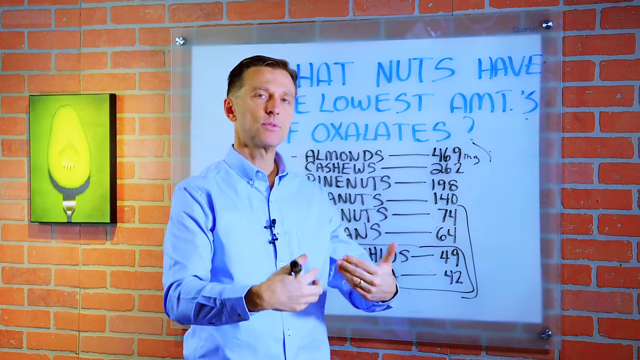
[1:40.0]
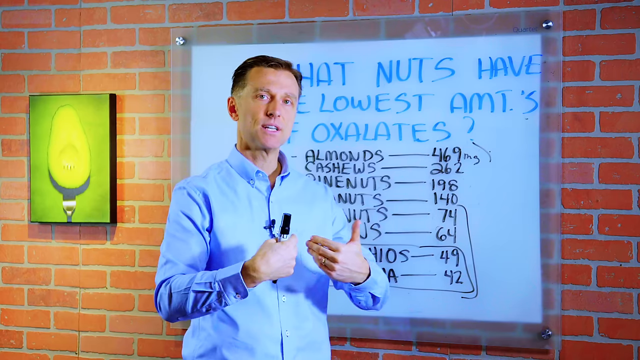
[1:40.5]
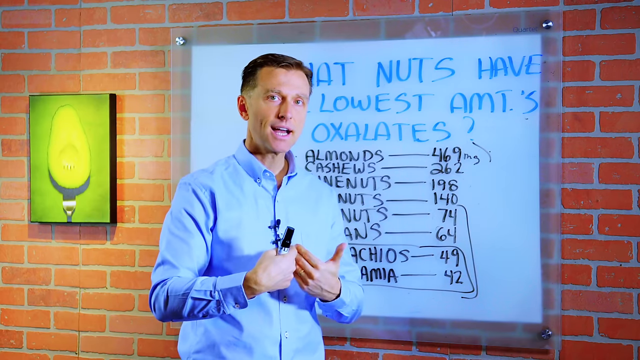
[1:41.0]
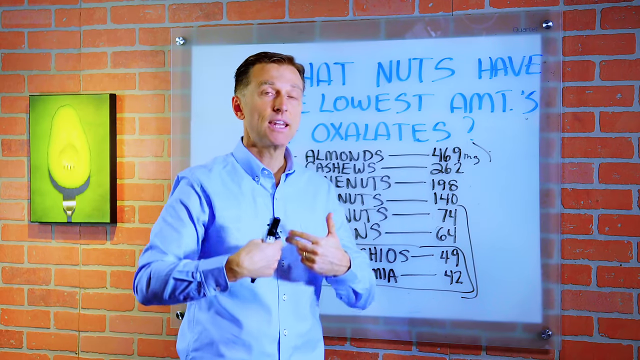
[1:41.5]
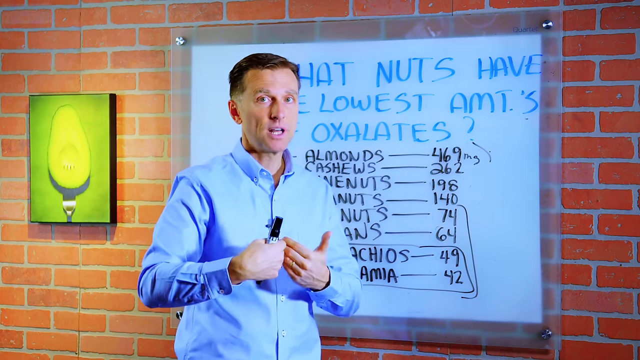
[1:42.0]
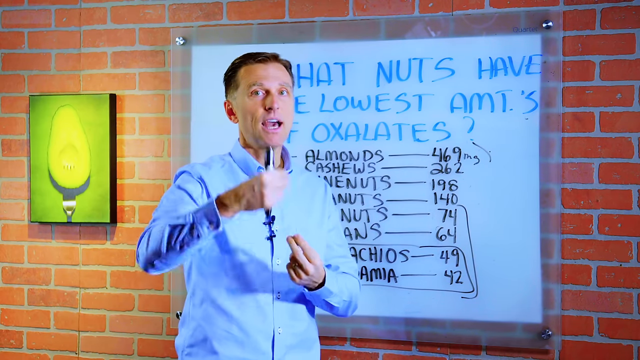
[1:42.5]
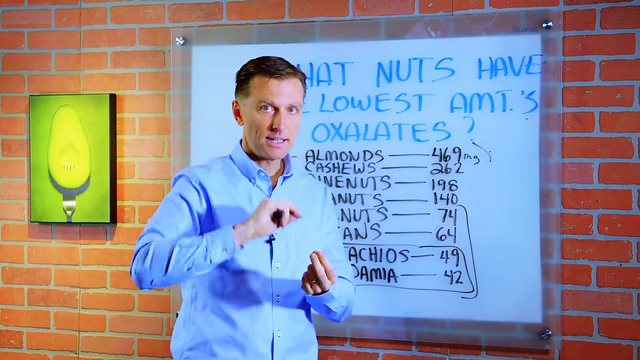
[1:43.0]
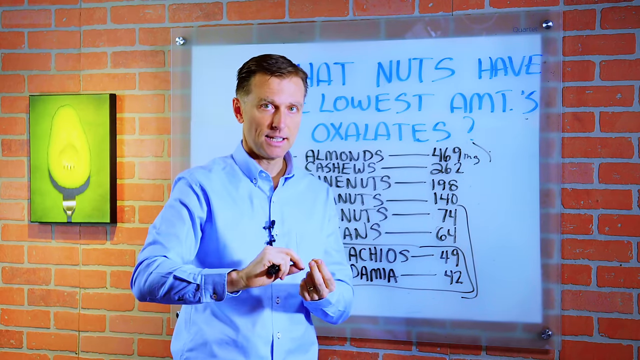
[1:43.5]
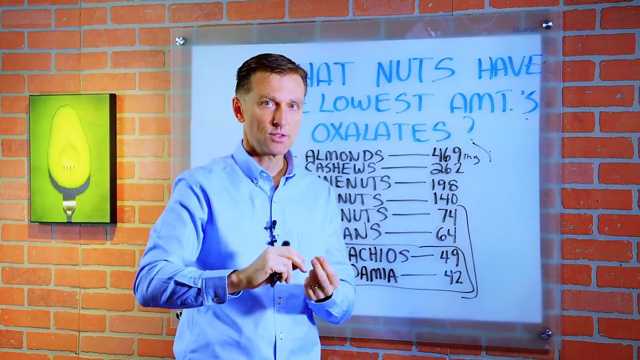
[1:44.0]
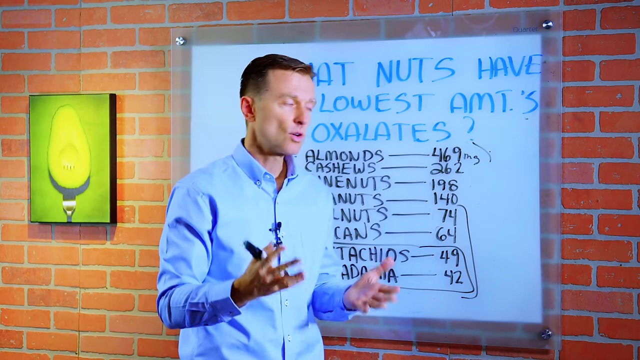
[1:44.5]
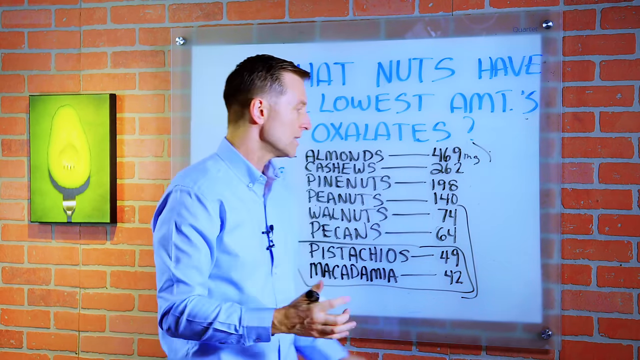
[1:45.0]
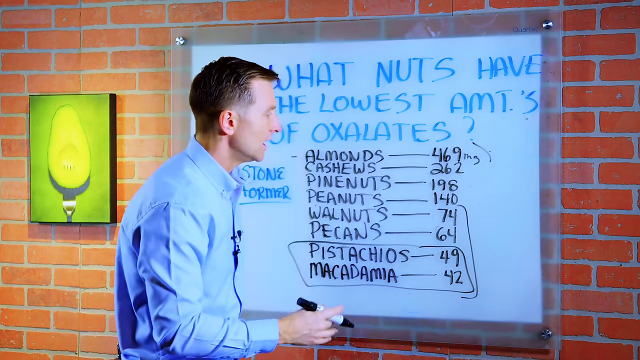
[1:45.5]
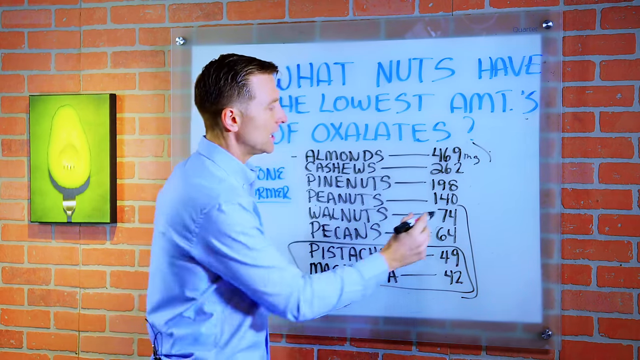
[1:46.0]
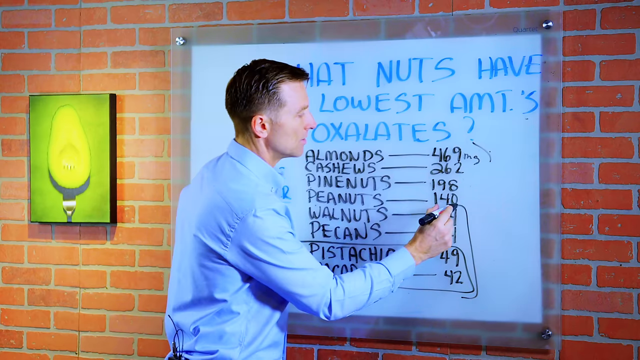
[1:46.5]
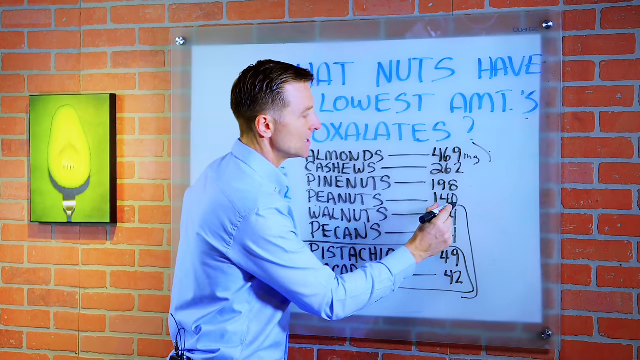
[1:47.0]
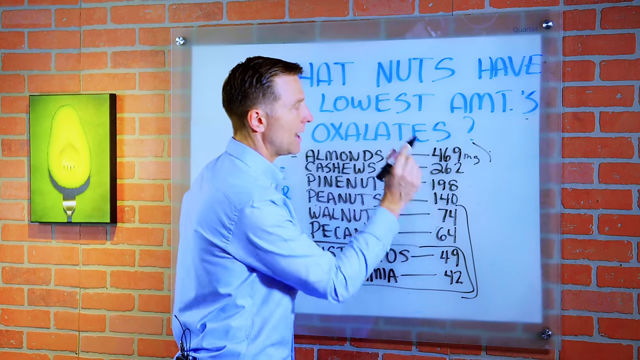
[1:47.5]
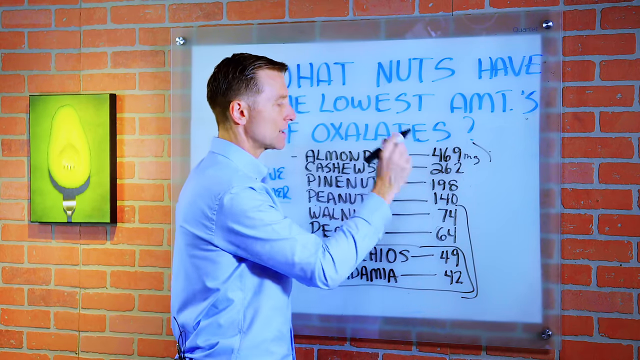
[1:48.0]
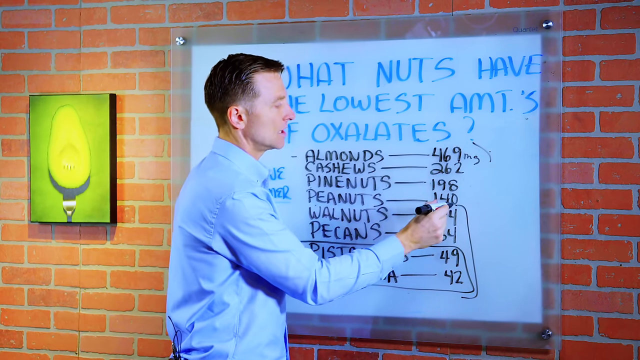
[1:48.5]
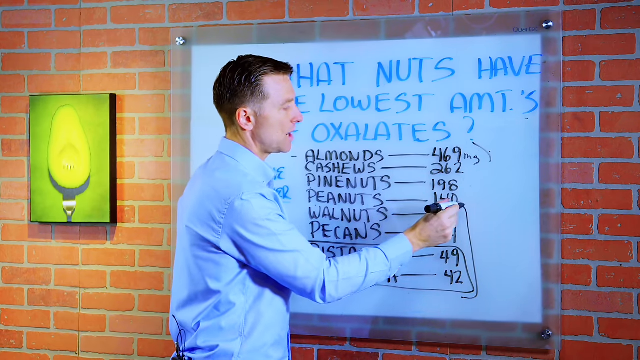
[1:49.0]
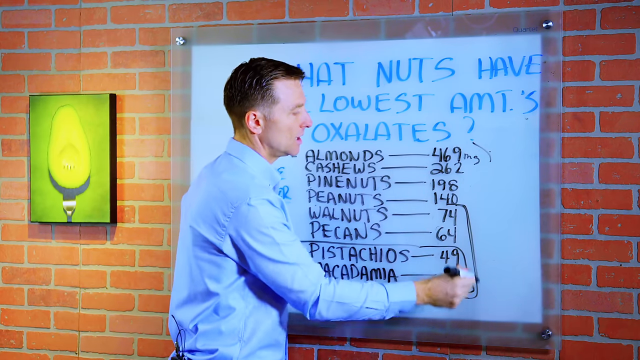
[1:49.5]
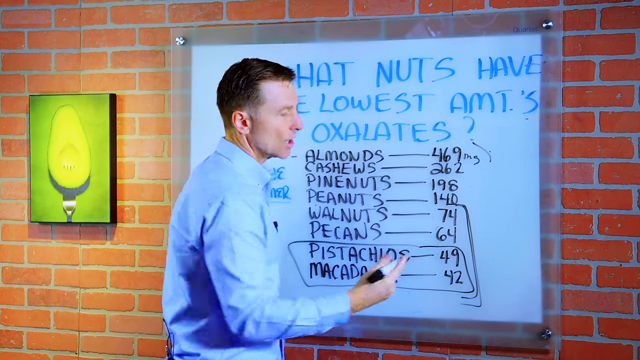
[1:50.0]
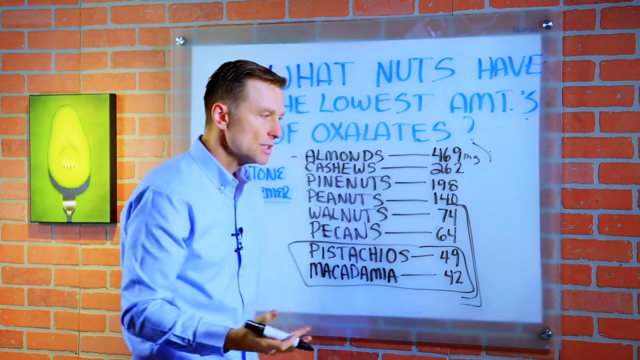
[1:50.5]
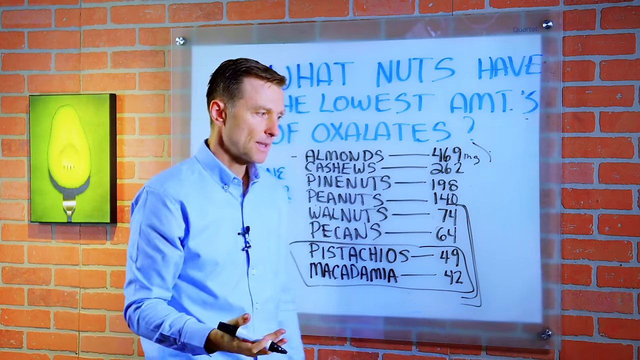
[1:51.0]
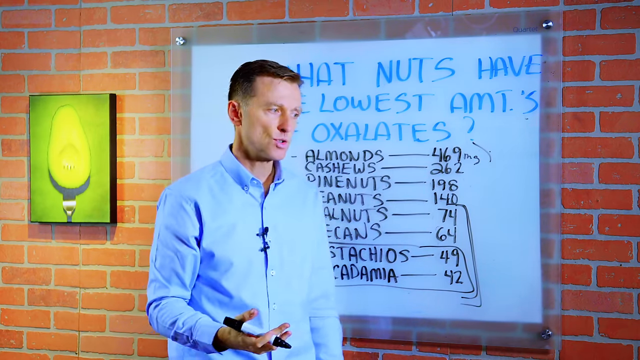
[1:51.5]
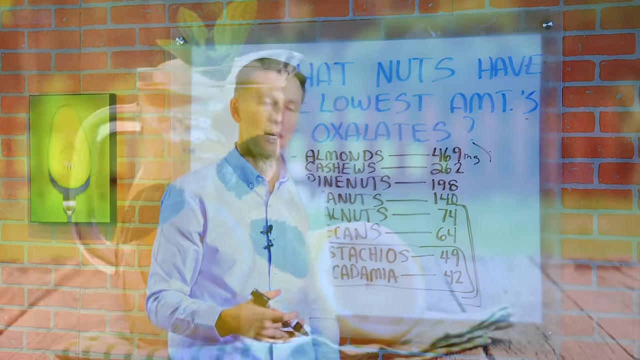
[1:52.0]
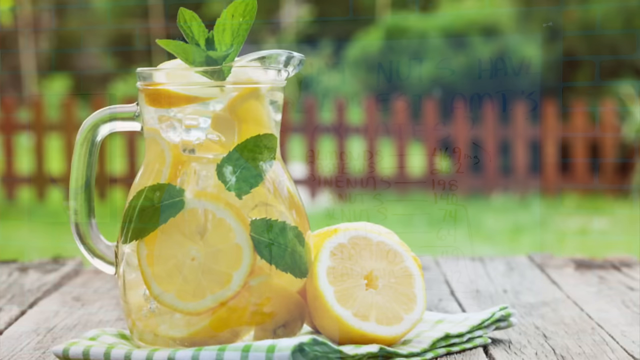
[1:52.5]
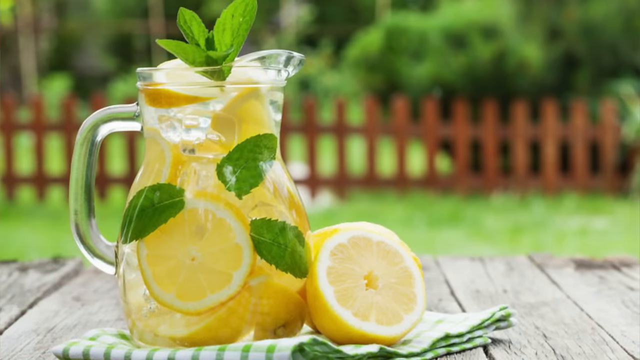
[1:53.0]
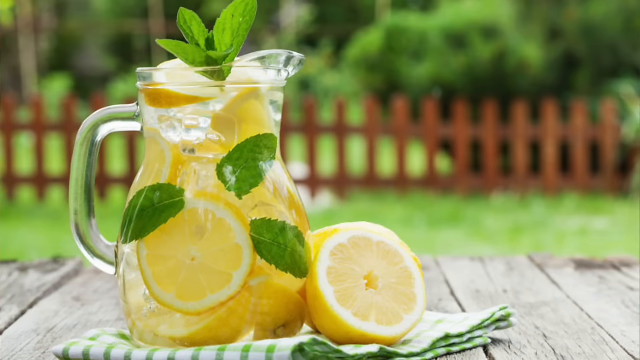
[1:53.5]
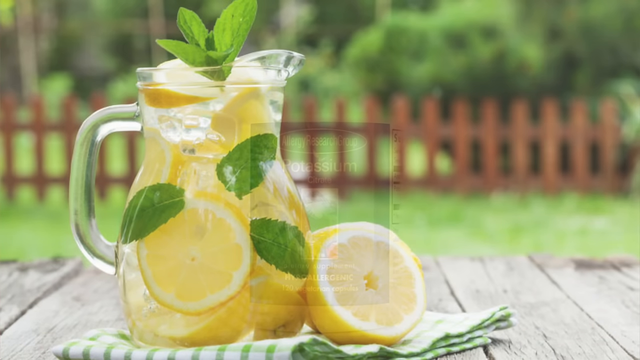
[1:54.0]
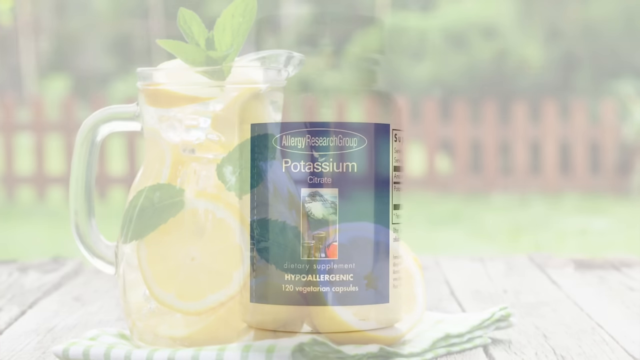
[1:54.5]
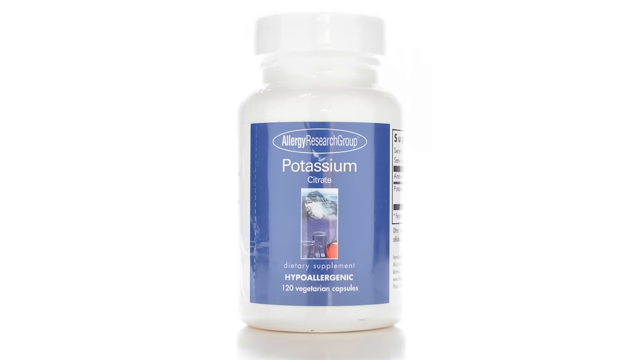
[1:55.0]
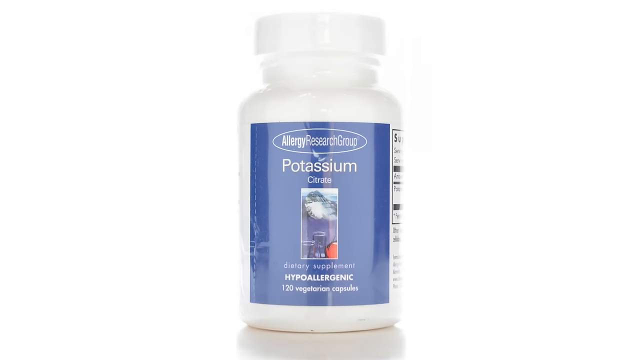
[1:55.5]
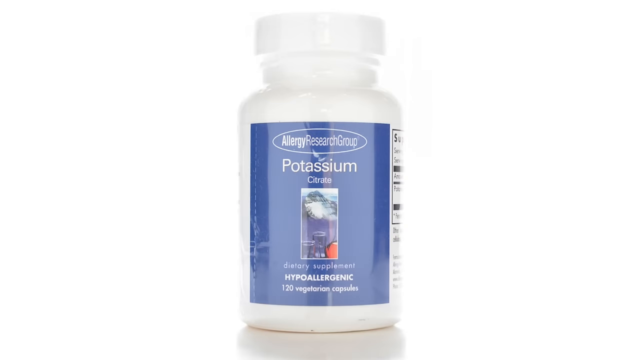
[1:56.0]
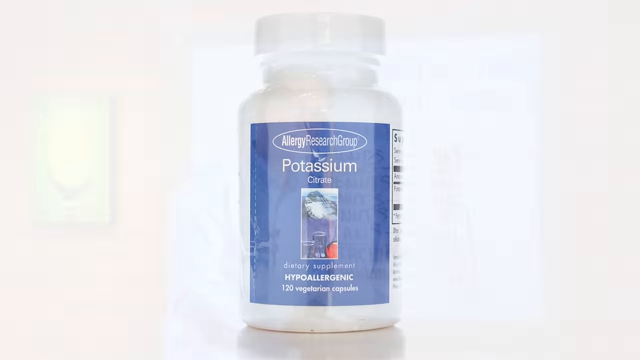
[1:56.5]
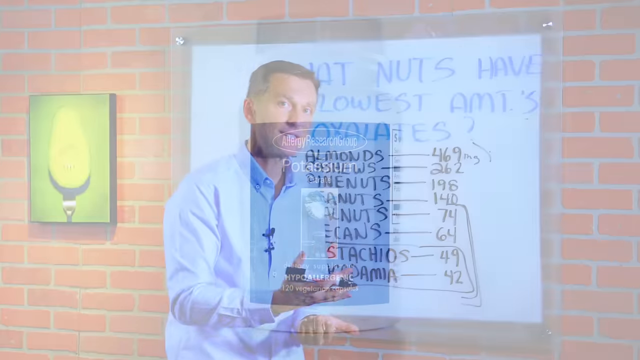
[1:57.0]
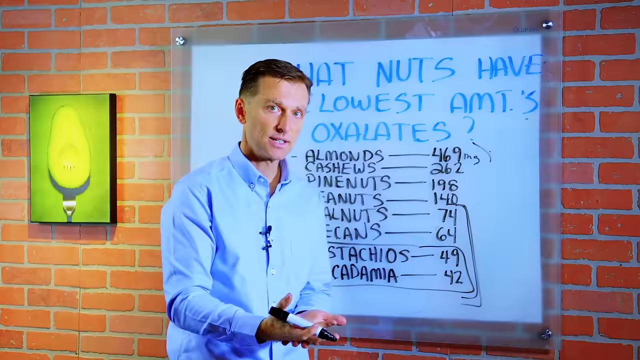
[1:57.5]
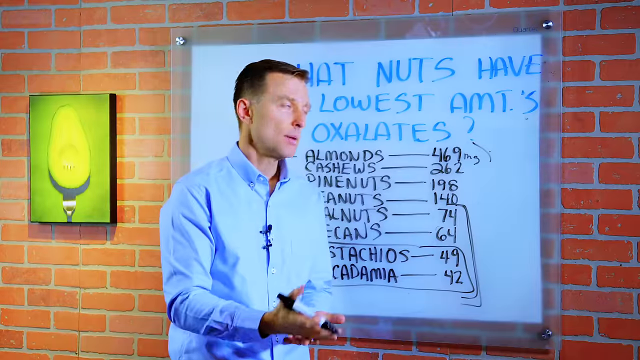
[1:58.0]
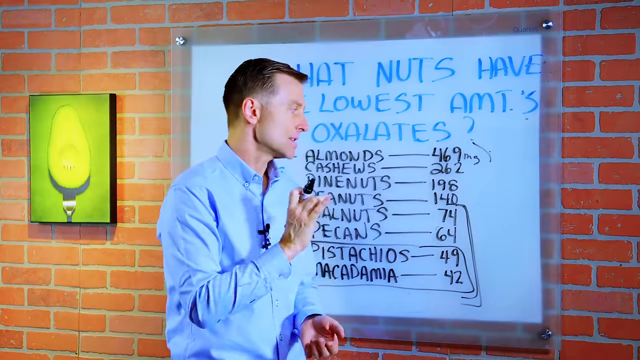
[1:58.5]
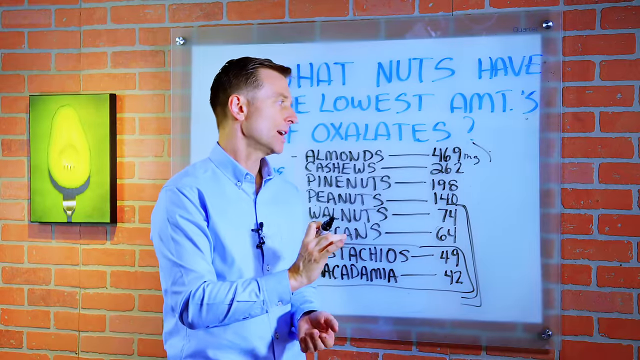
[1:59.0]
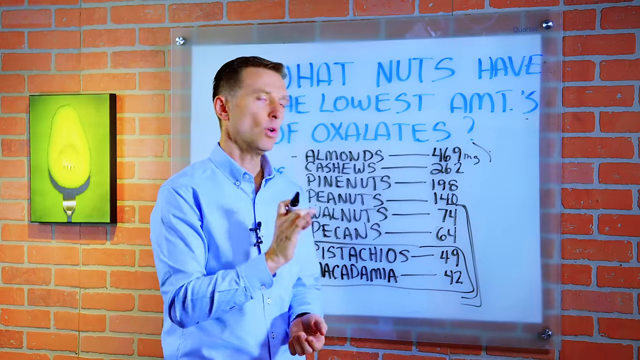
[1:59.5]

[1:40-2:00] The doctor appears with his list of what seems to be seven different nuts. A jug of orange juice is shown, followed by a bottle of potassium supplements.